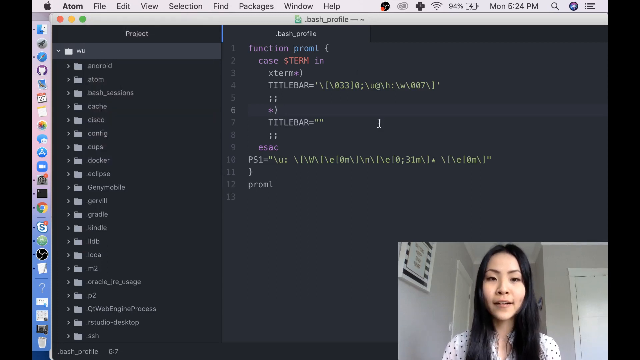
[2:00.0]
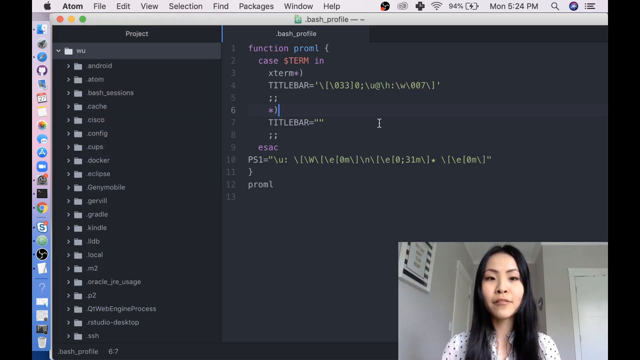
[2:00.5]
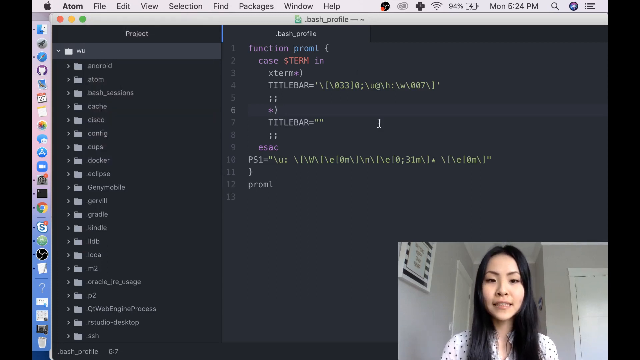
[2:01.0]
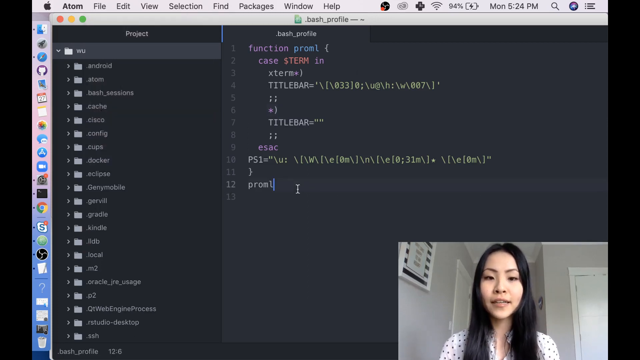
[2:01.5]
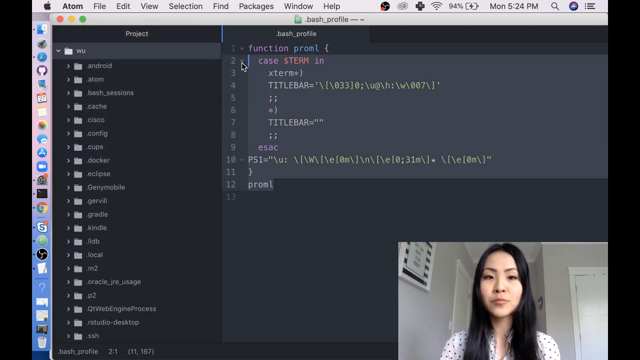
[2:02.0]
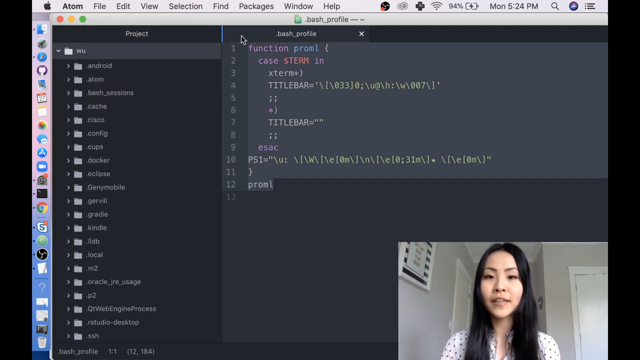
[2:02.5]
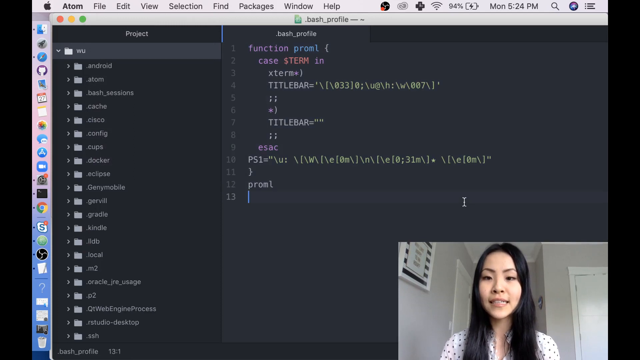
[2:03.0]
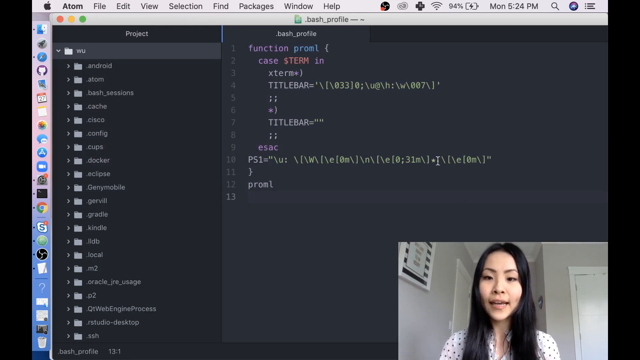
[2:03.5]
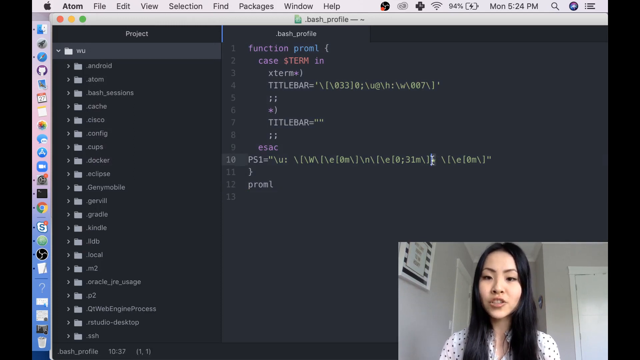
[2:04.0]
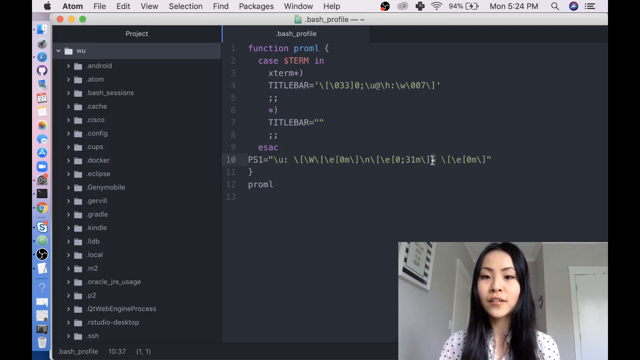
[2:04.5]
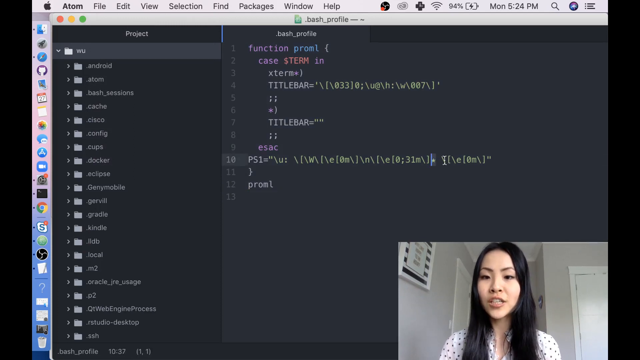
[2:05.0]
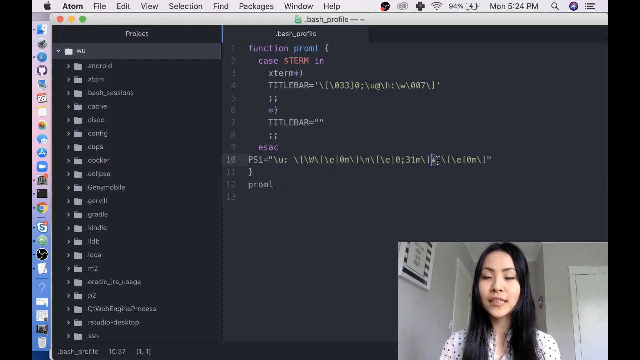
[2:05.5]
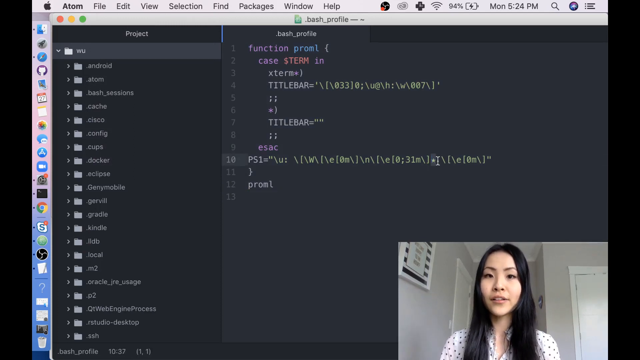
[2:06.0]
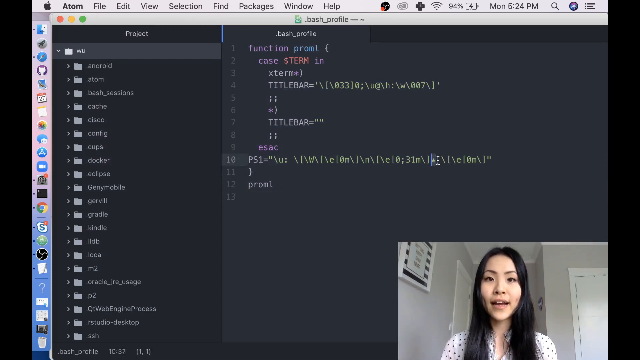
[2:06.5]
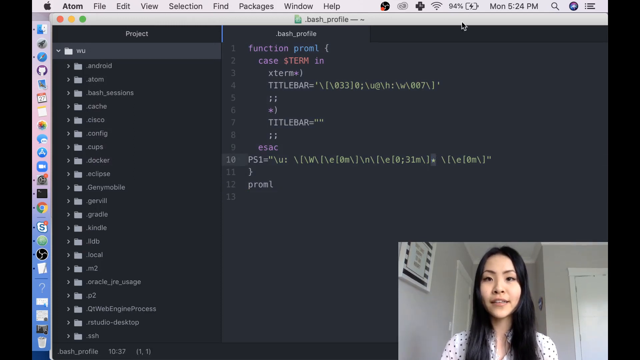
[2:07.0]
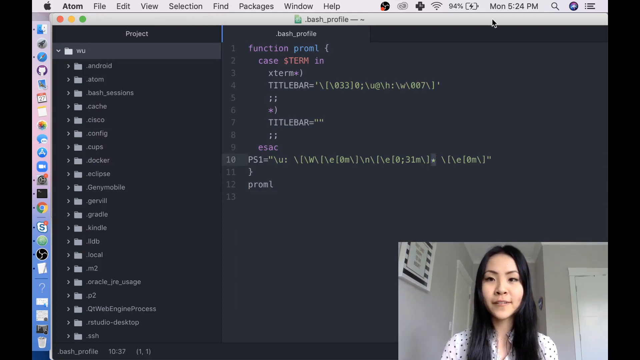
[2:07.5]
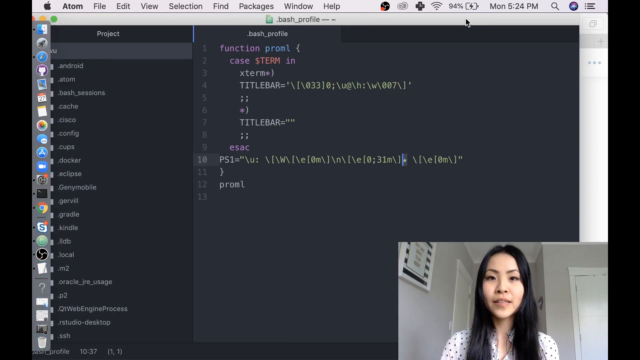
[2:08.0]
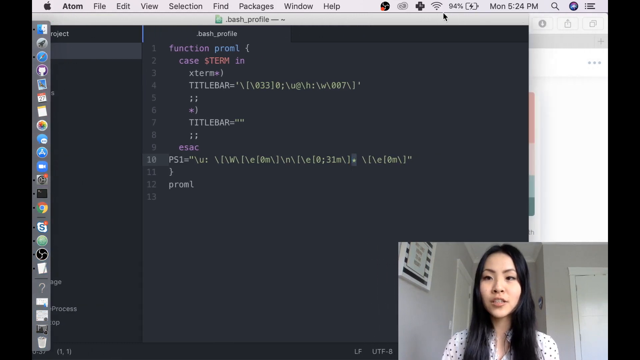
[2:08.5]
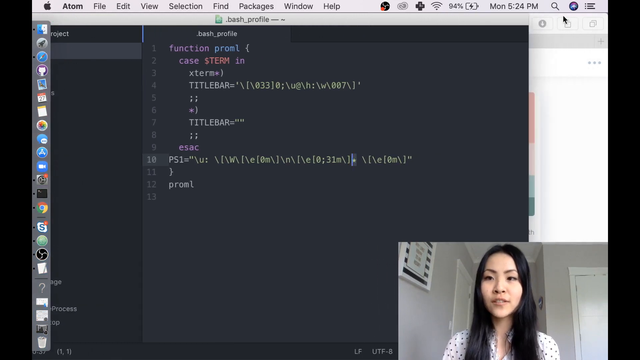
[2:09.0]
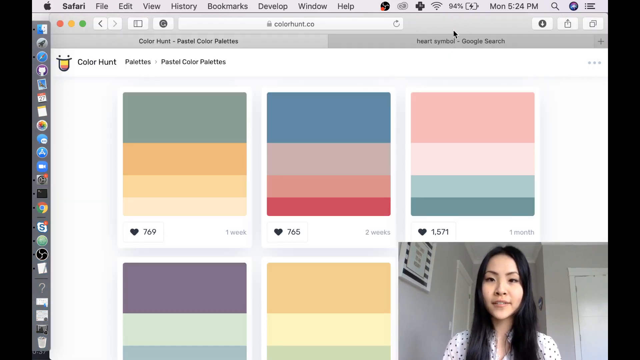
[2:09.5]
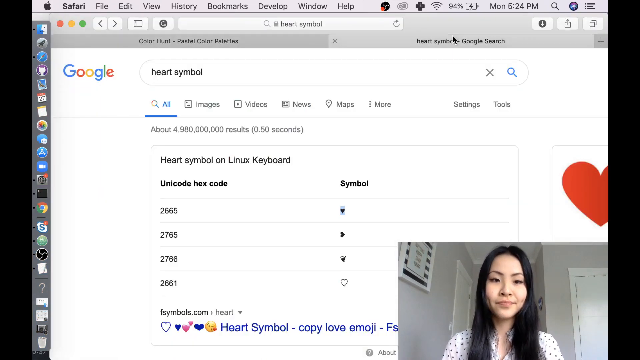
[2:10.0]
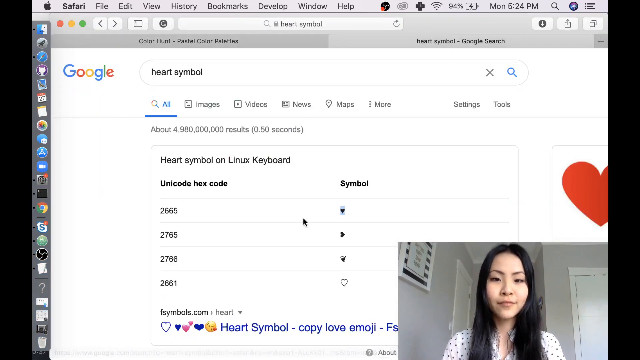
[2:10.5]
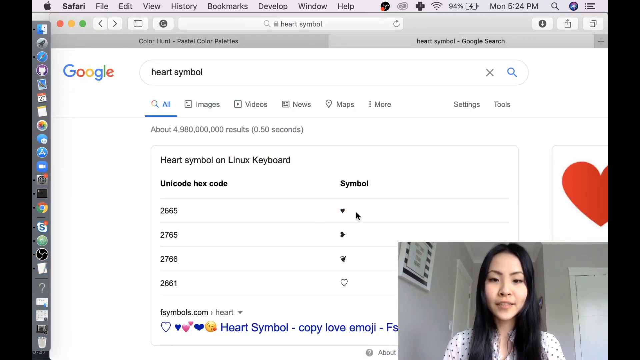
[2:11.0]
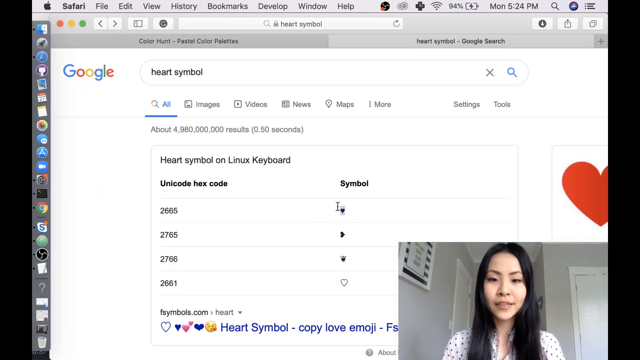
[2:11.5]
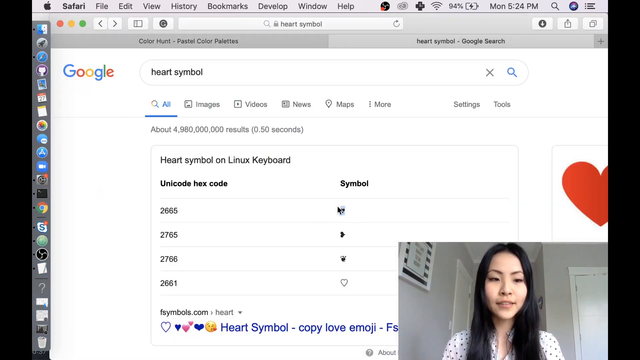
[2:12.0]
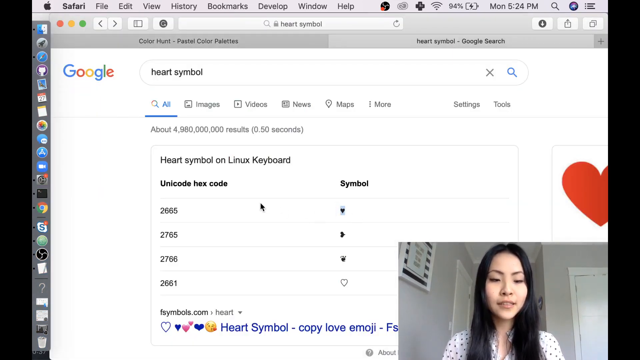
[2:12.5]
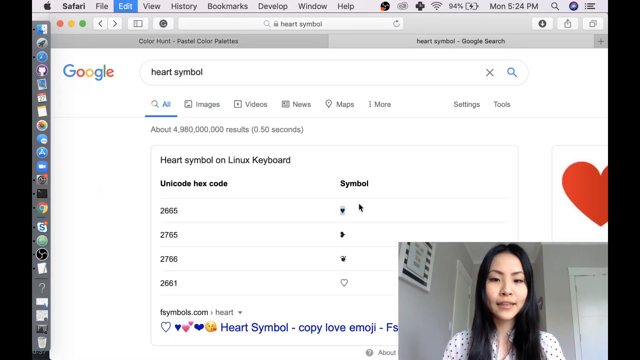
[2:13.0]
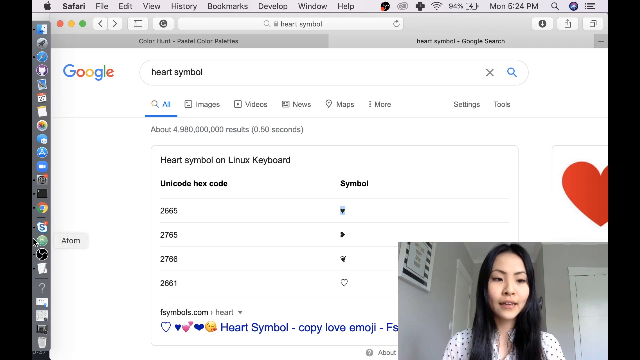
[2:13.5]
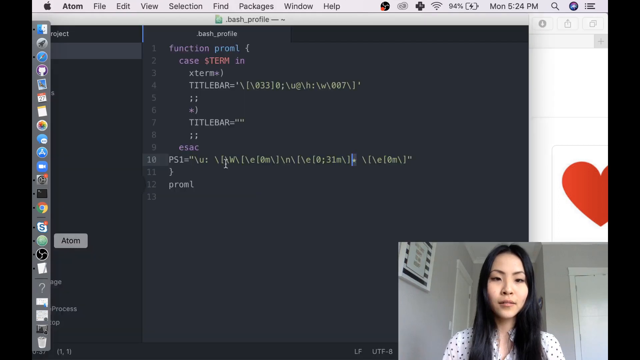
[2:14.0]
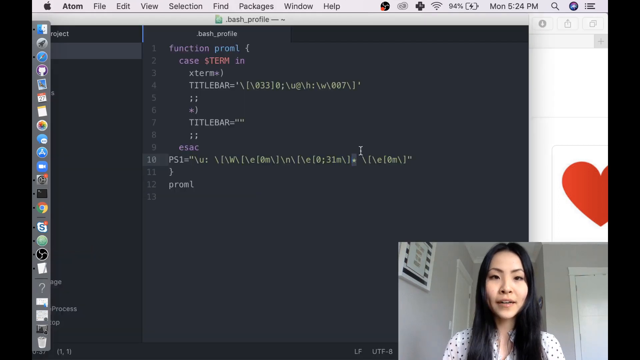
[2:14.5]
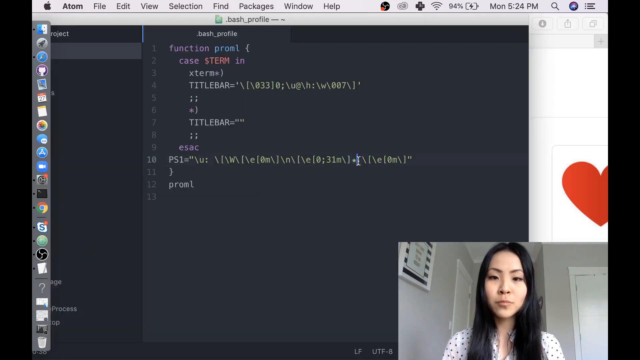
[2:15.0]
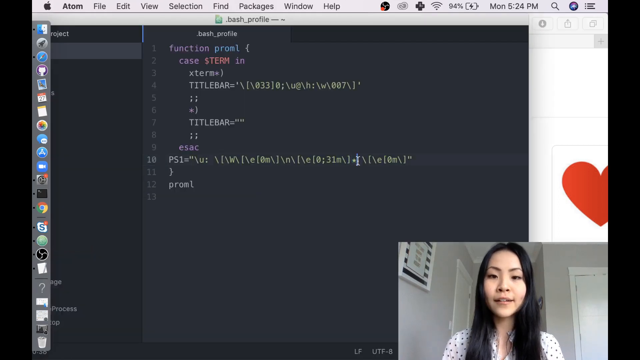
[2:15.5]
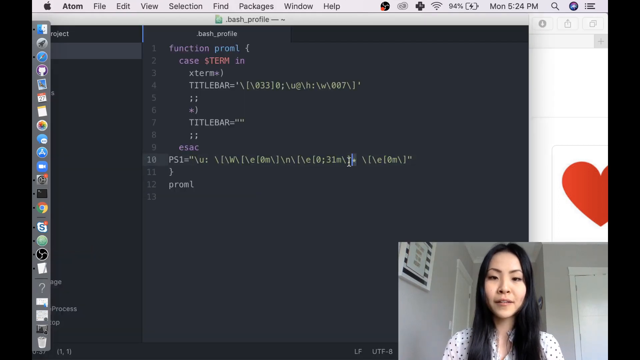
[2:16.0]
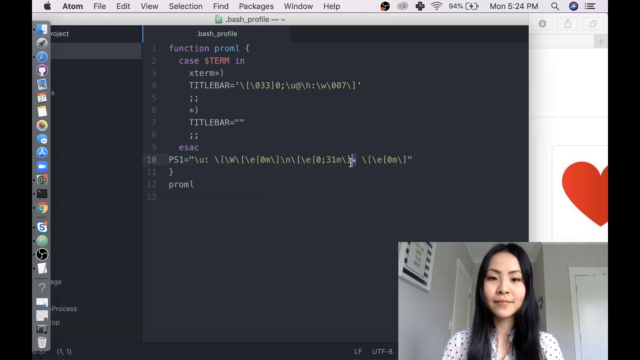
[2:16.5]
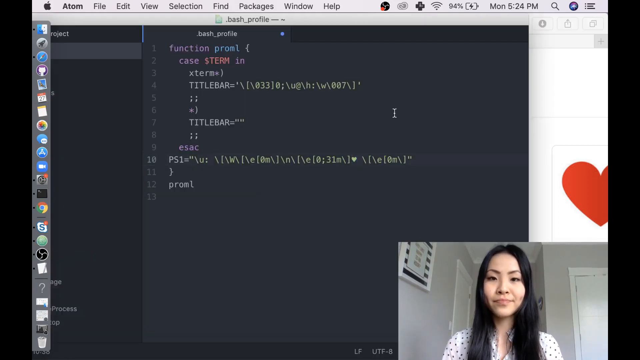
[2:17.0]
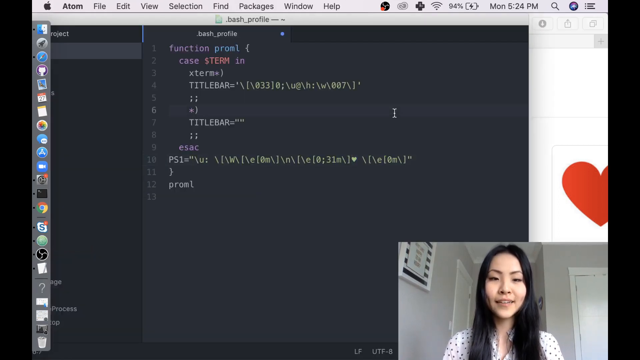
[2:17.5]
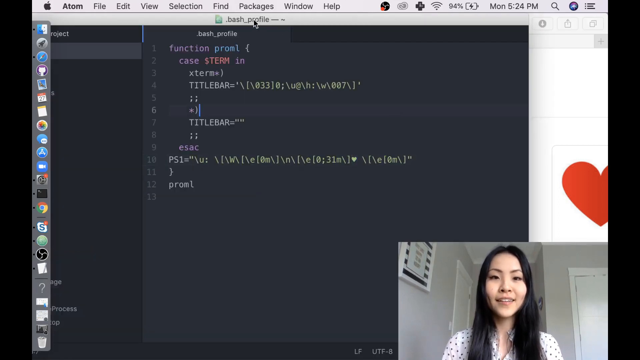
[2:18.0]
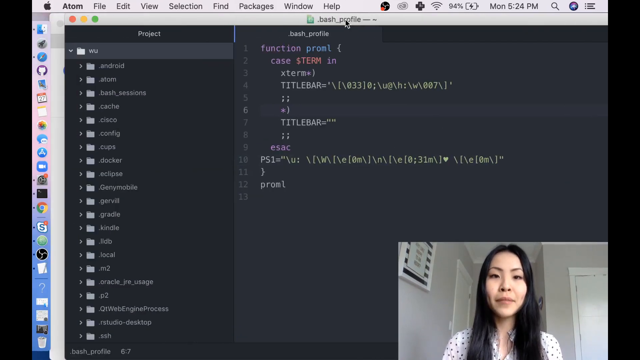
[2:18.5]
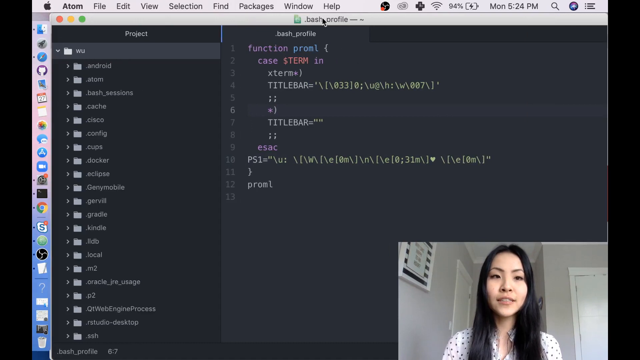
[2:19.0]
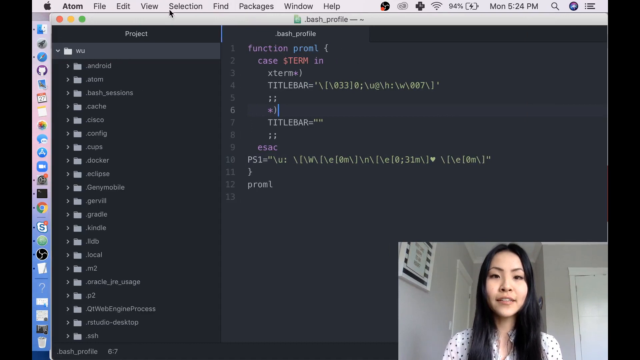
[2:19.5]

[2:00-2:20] The woman shows various code, which is written in an orderly fashion.